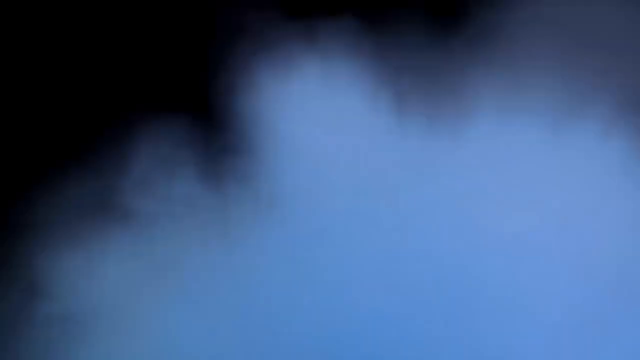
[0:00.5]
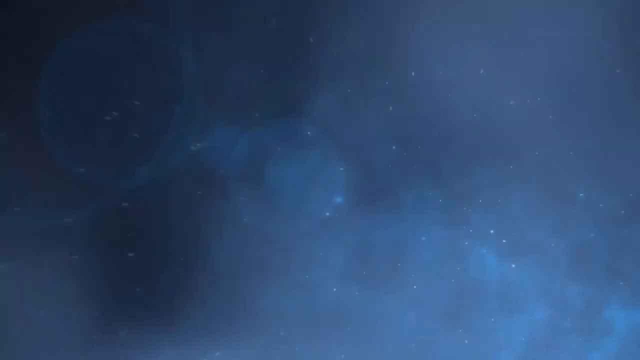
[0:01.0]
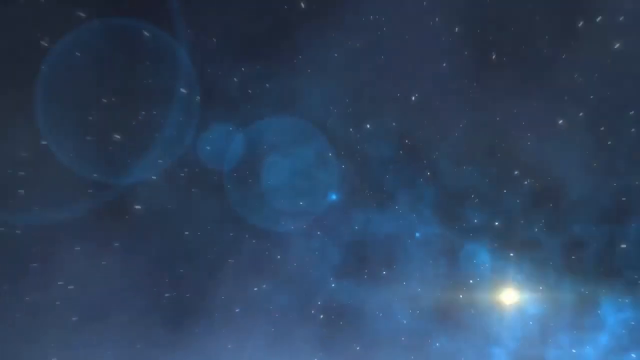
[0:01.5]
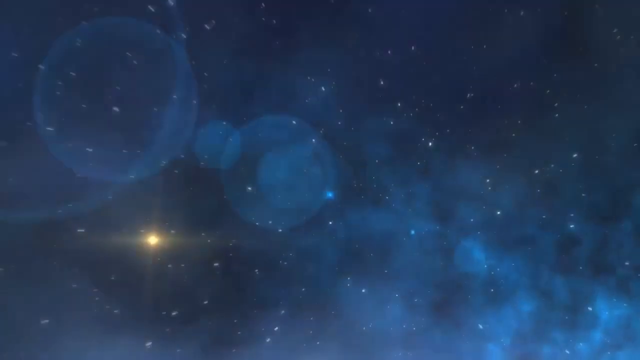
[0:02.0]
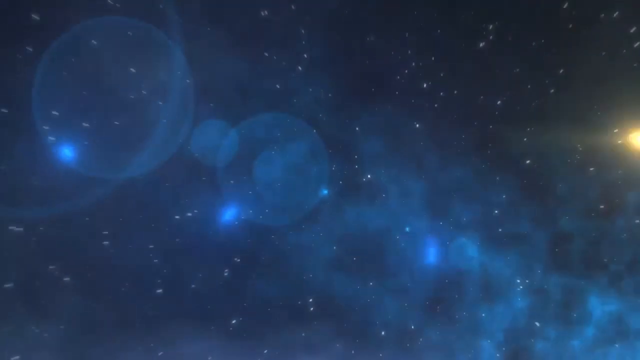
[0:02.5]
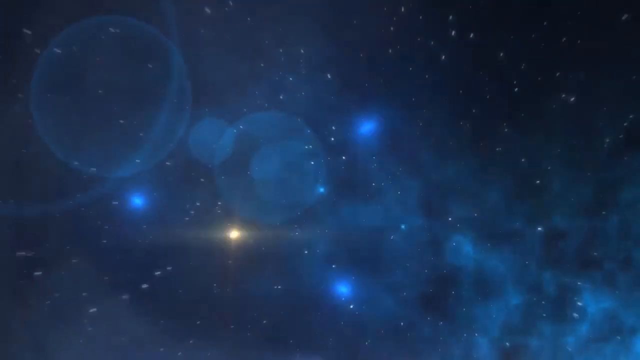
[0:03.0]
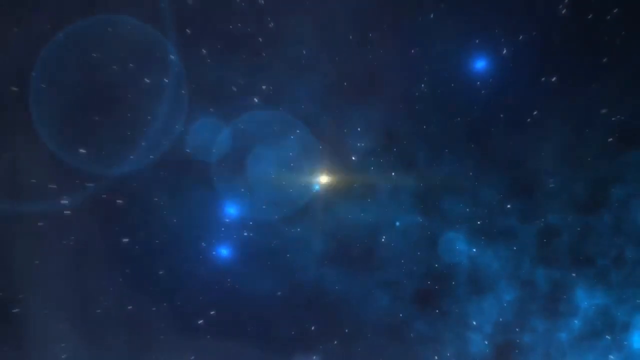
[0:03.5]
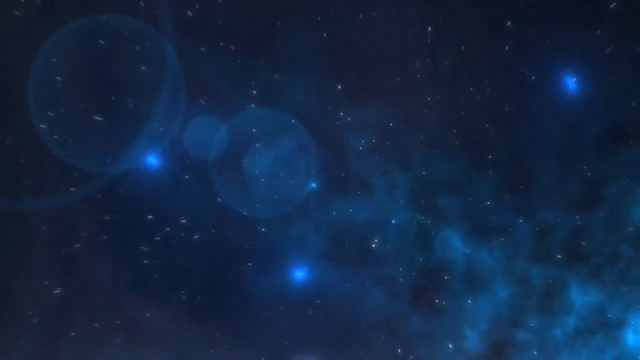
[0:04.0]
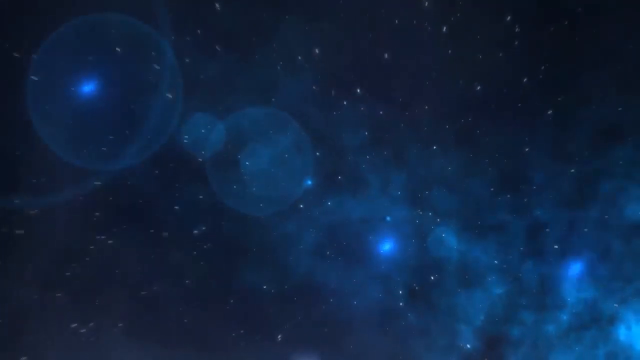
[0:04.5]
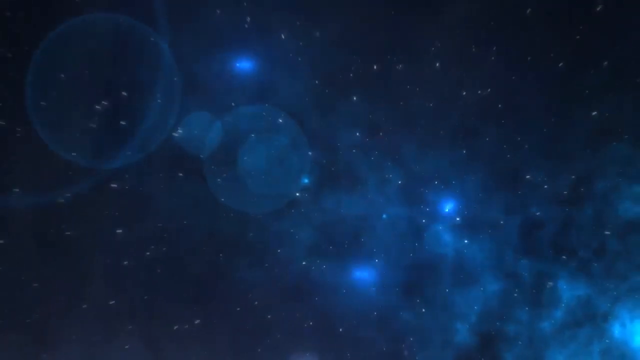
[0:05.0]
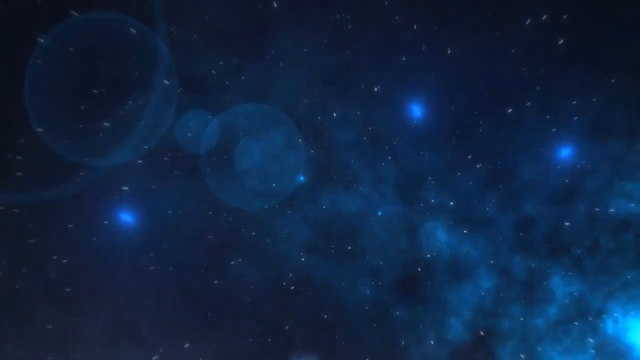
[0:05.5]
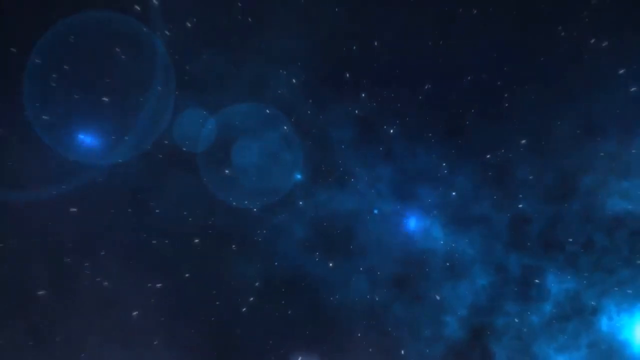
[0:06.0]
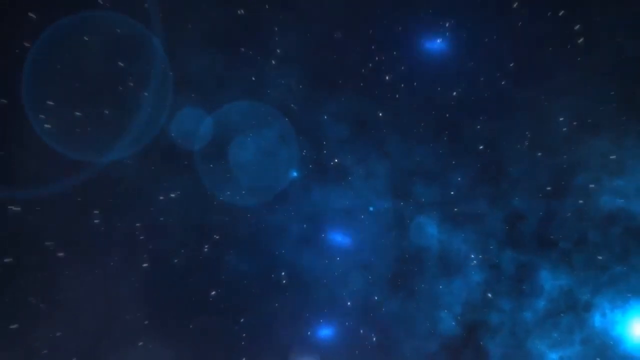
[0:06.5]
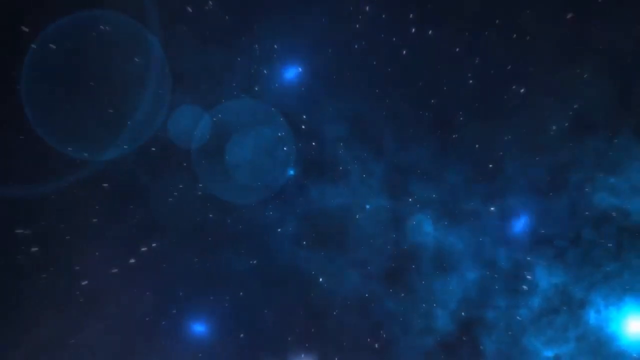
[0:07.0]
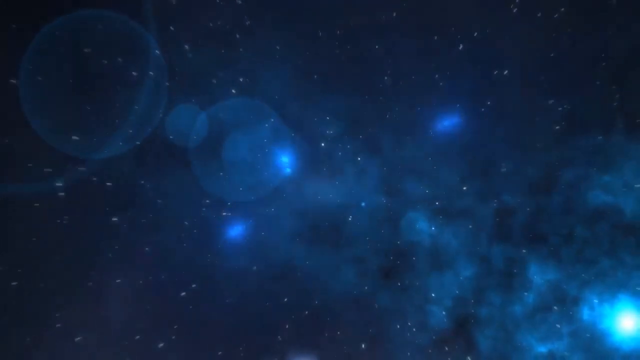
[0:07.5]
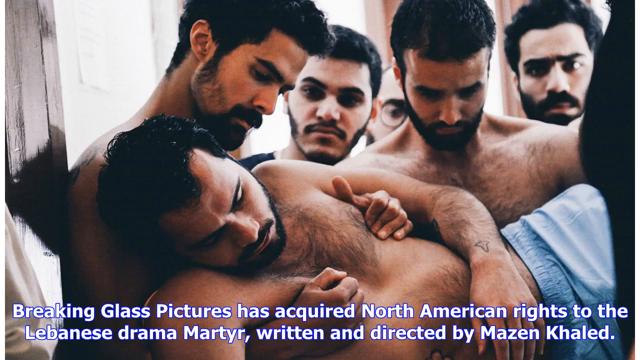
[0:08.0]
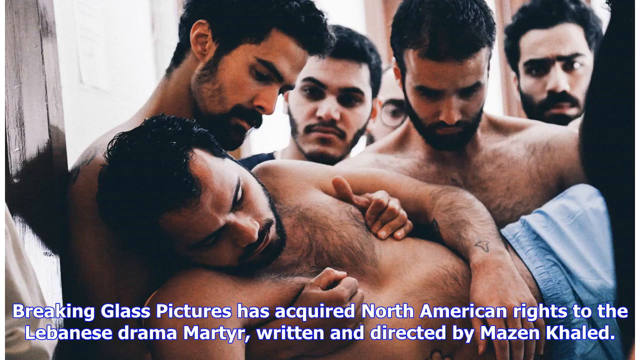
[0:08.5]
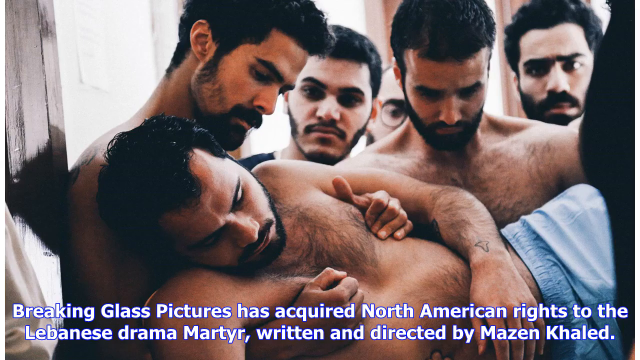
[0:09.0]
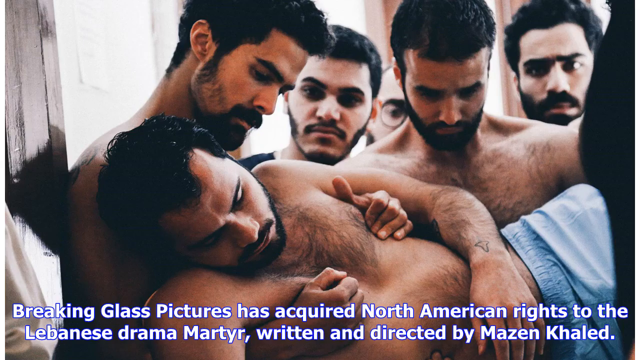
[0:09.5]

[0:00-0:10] The video begins with a cloud and a view of space, with blue lights and cloudy skies. It then cuts to an image of shirtless men and someone who looks like they are knocked out. Text on the bottom of the screen reads: "Breaking Glass Pictures has acquired North American rights to the Lebanese drama Martyr, written and directed by Mazen Khaled." There are five people in the shot, four of whom are carrying the knocked-out body. There is a lot of chest hair in the image, and all of them have dark brown hair on their heads.